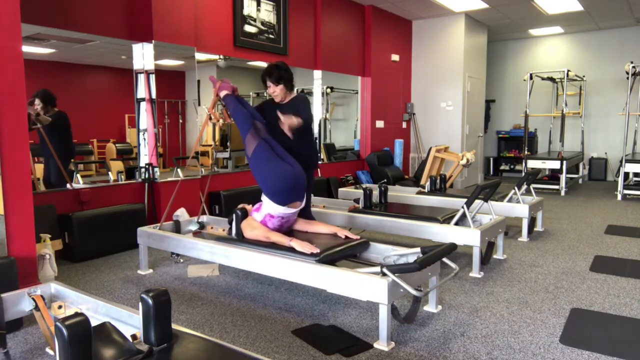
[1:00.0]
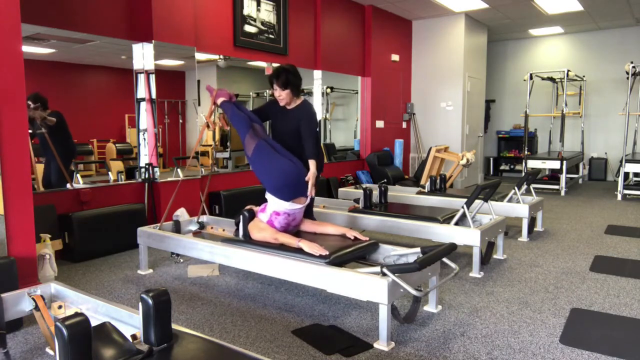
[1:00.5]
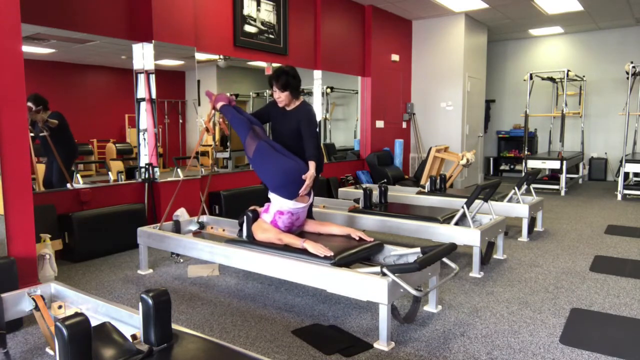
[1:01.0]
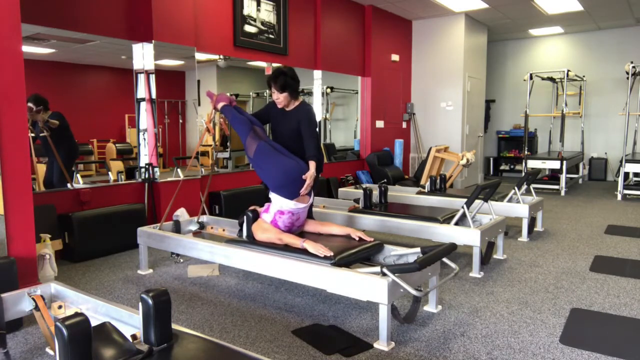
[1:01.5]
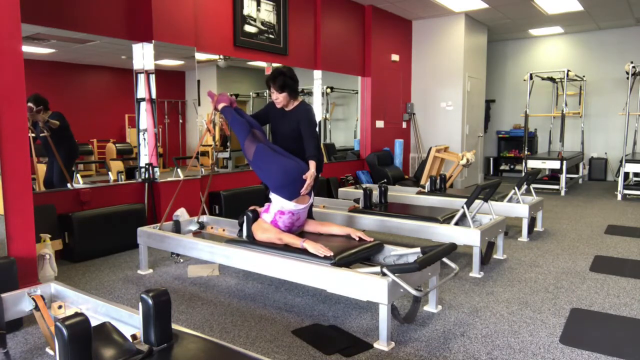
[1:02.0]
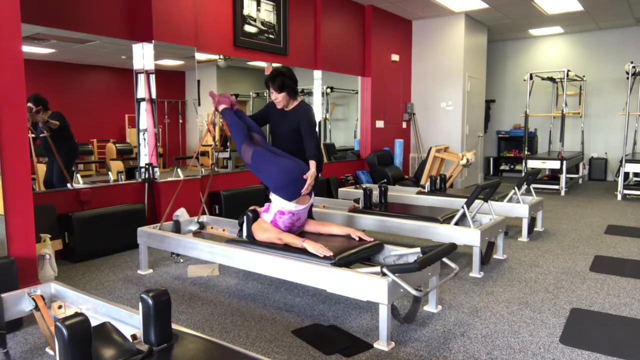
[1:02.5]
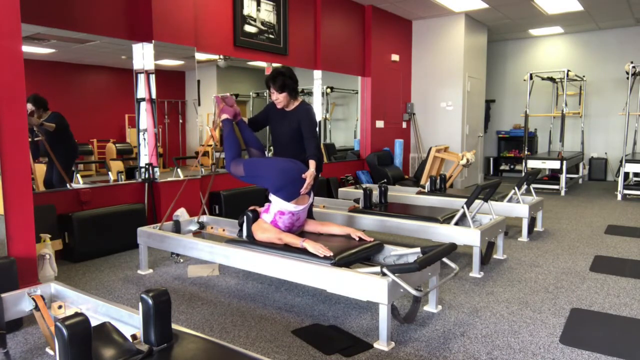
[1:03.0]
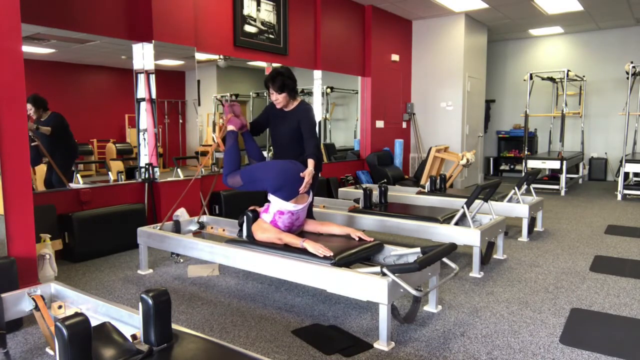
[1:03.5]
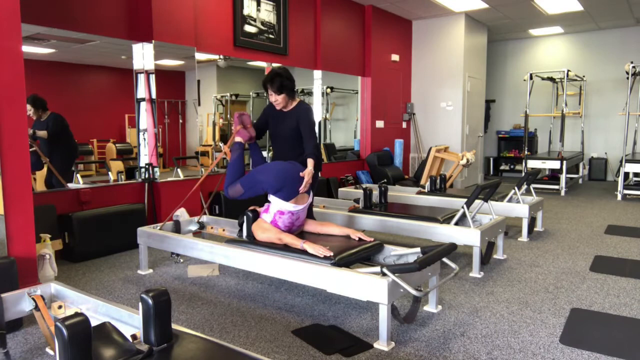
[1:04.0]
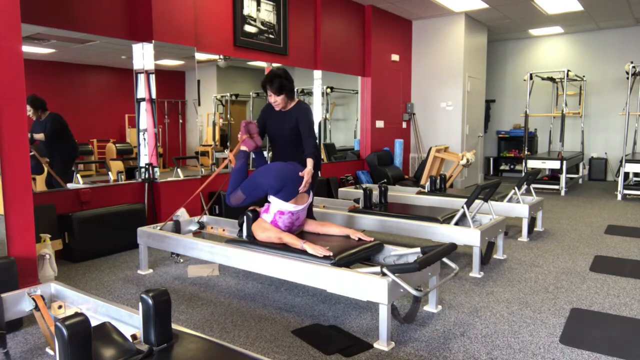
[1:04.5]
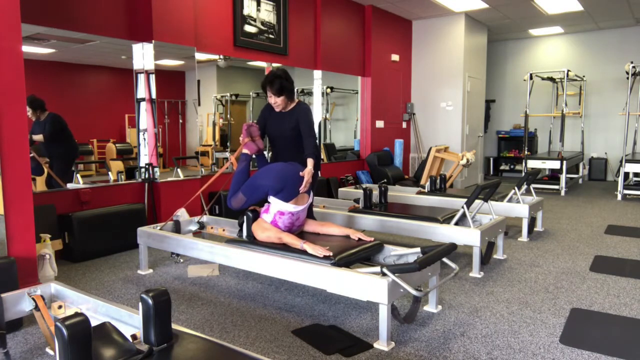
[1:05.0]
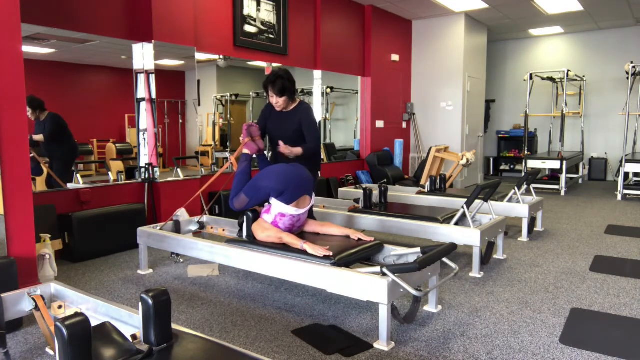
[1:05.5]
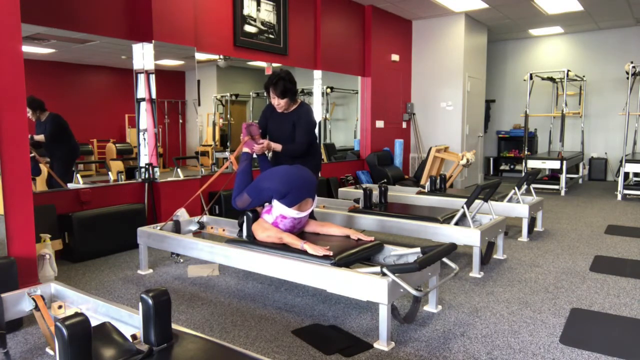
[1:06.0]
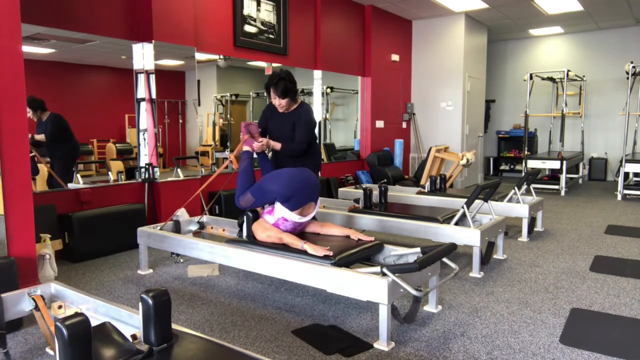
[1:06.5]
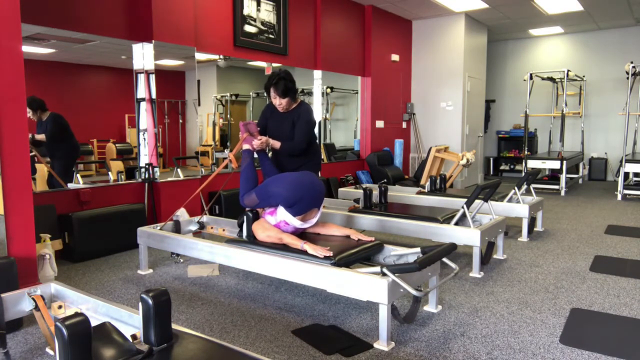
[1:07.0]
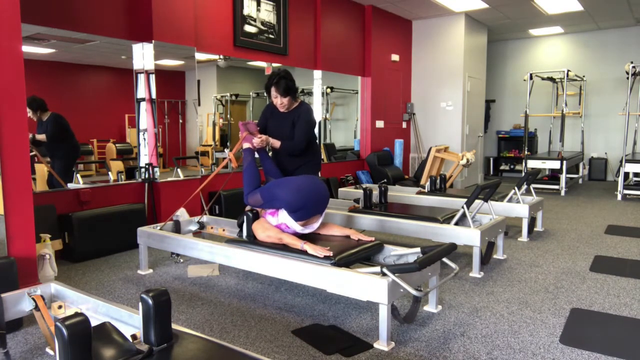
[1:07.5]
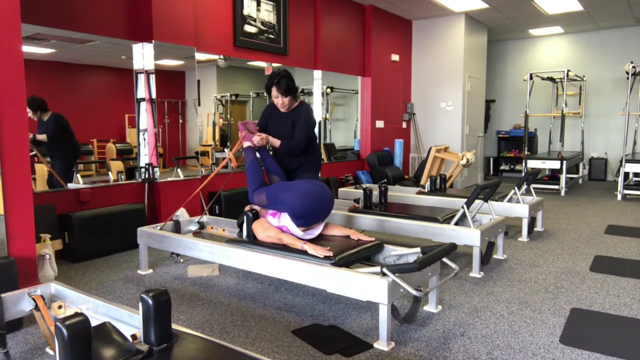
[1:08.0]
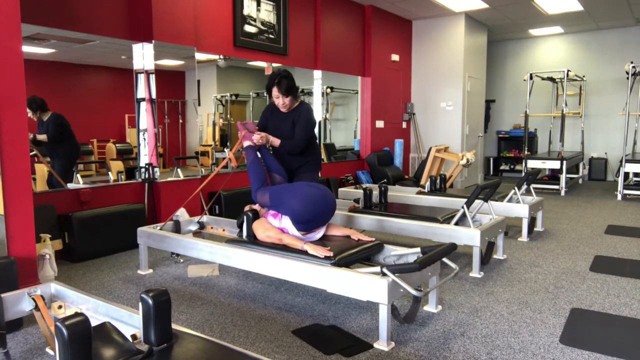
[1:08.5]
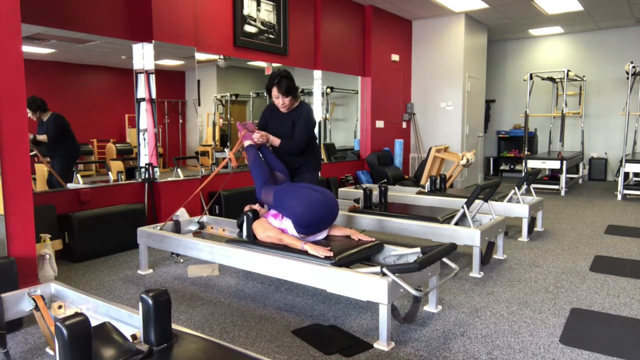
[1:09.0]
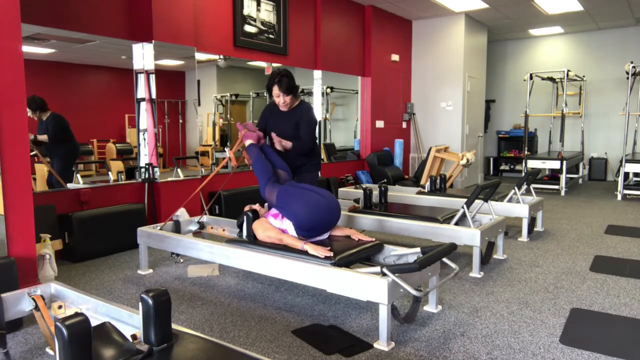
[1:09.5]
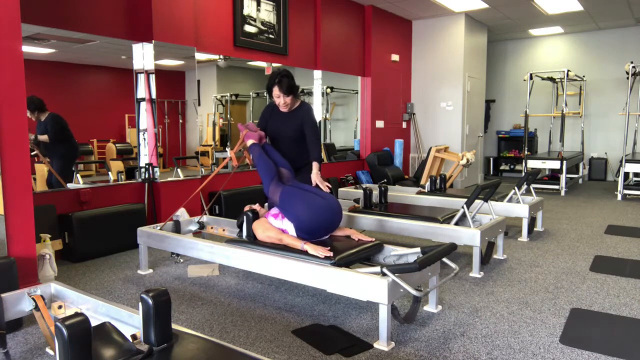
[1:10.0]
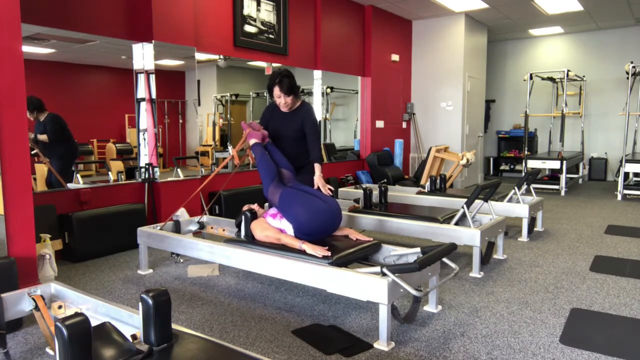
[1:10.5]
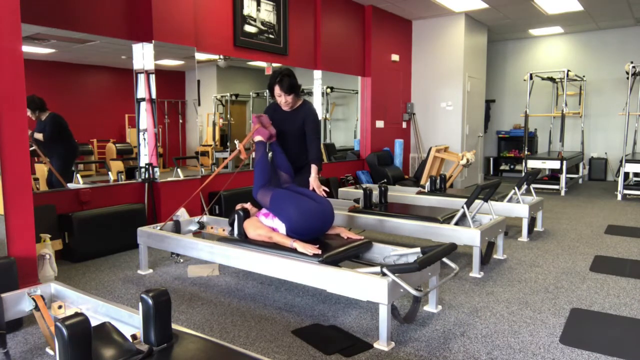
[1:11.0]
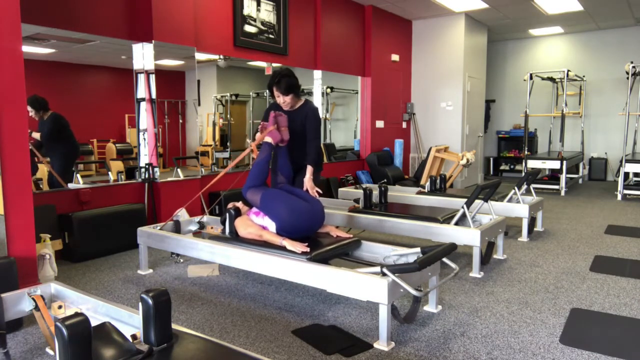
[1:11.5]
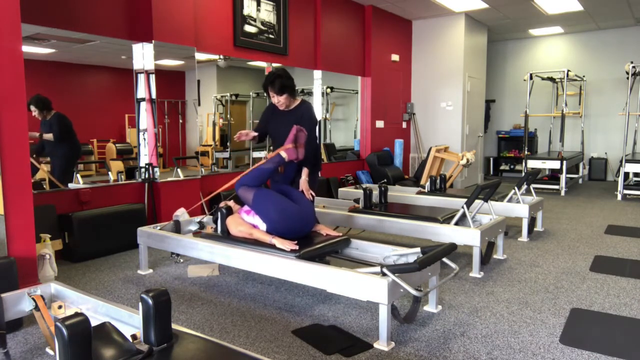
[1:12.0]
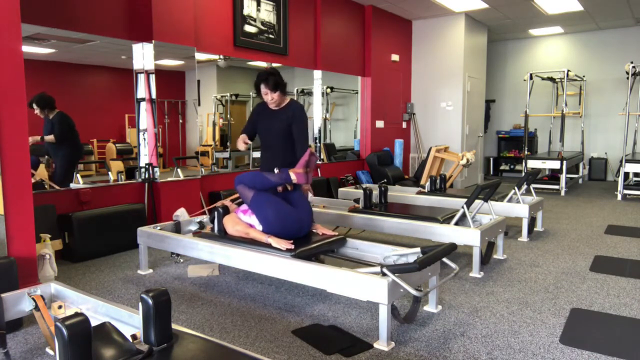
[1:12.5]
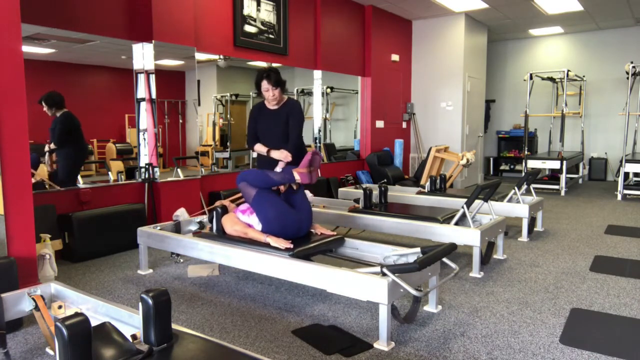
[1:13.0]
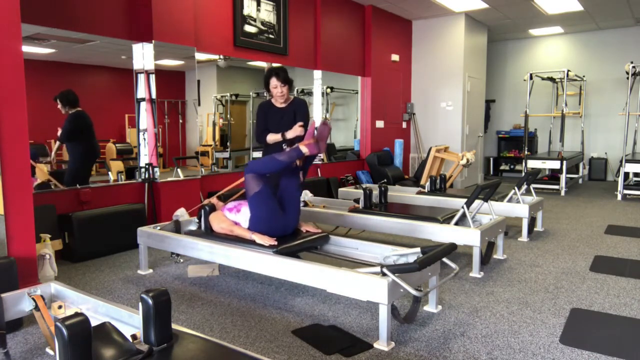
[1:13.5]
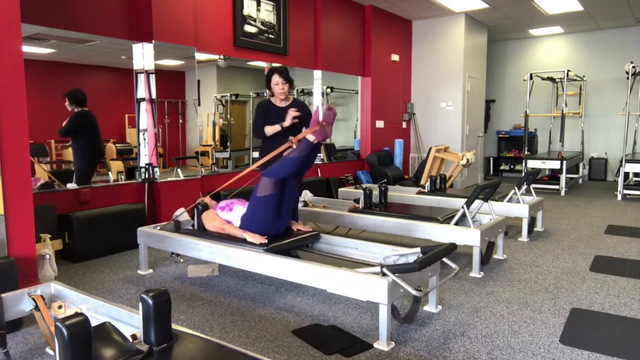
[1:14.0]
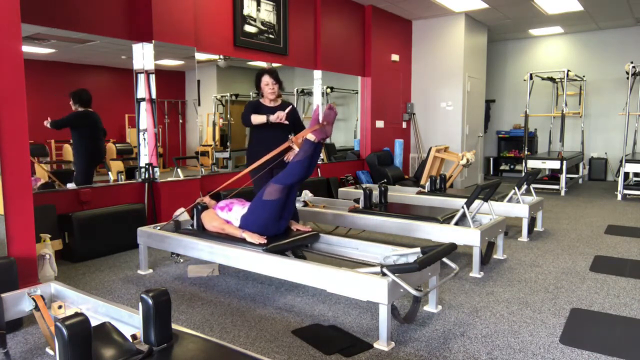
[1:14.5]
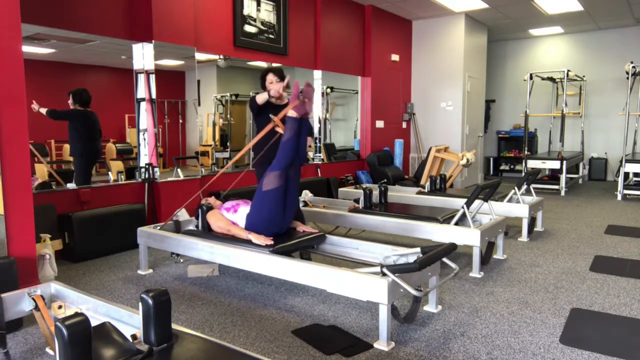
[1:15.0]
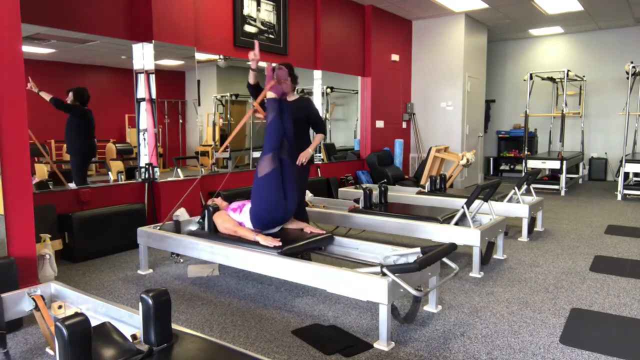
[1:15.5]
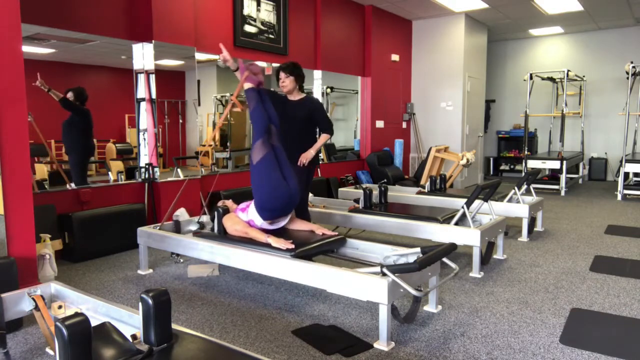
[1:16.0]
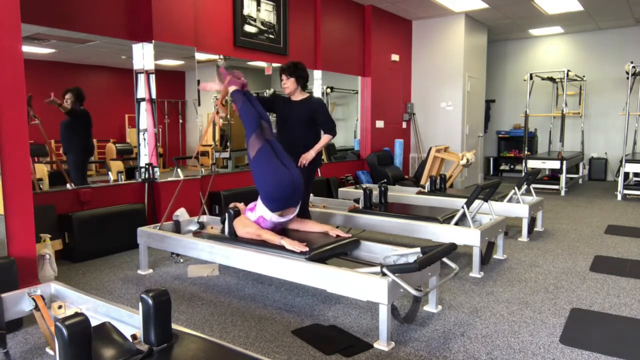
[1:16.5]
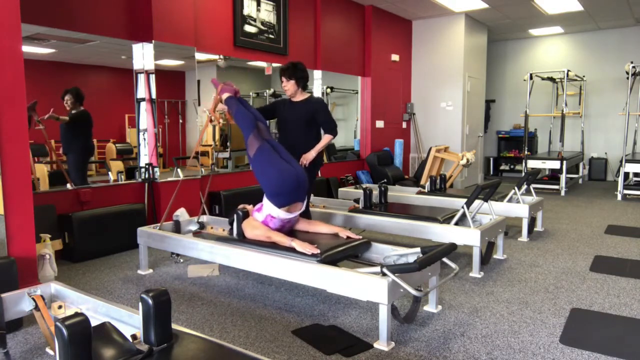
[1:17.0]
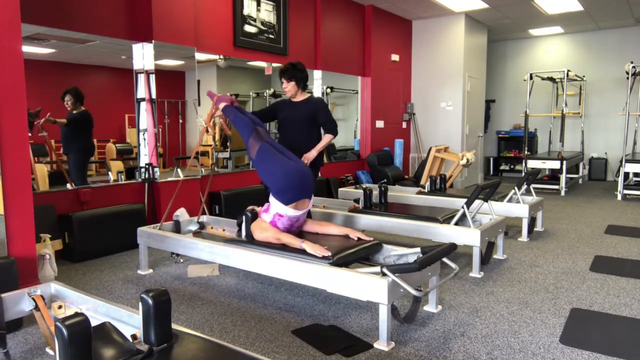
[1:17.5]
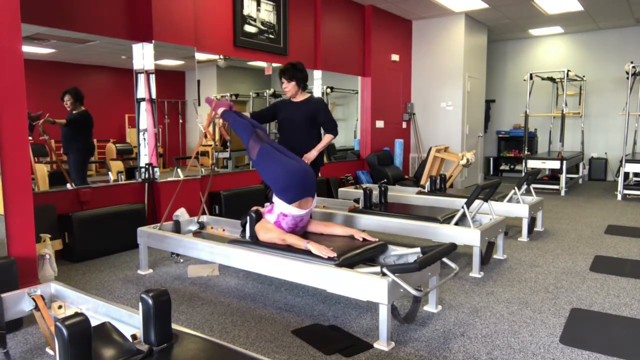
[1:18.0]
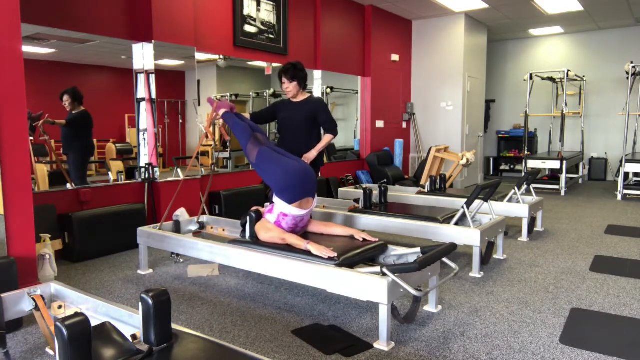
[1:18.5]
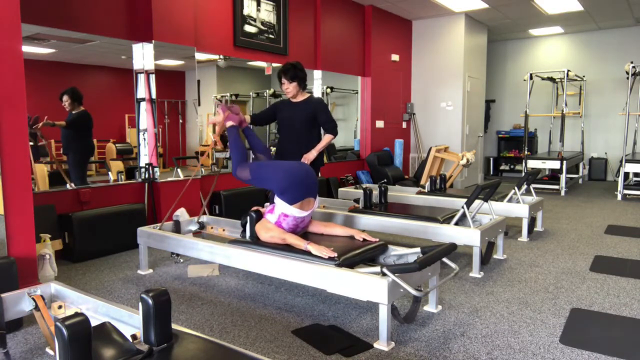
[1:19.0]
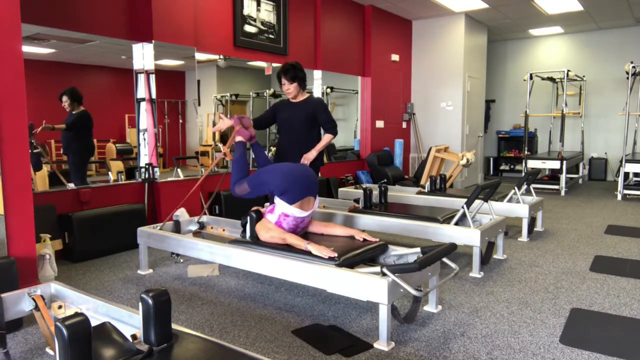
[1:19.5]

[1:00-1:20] The Pilates reformer tutorial continues in the studio with reformers lined up against a red mirrored wall. A woman is on a reformer in the foreground, and a woman standing behind her next to the reformer helps her get into position and perform the exercises. The woman has her feet in the loops of the stretch bands, her legs stretched out over her head, and her lower back and buttocks lifted off the carriage. The woman behind her rests her hand on the woman's lower back to help her stretch her legs further over her head, then helps push her feet back down as her knees bend closer to her face and she begins to lower her lower back to the carriage. She stretches her feet back out so her legs are stretched in front of her, then performs the maneuver on her own without being held, while the standing woman moves her hand over the woman's body to indicate how she should move her legs.